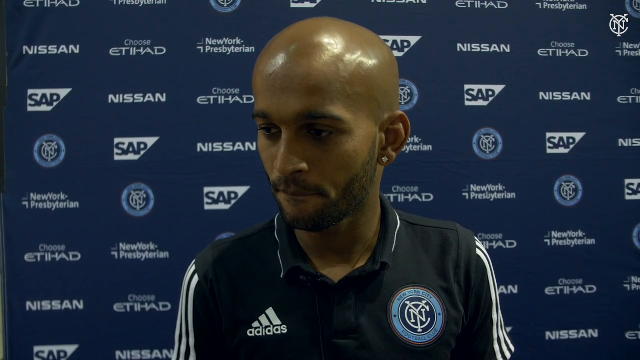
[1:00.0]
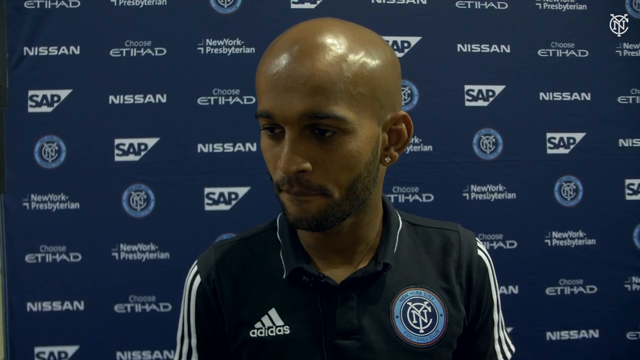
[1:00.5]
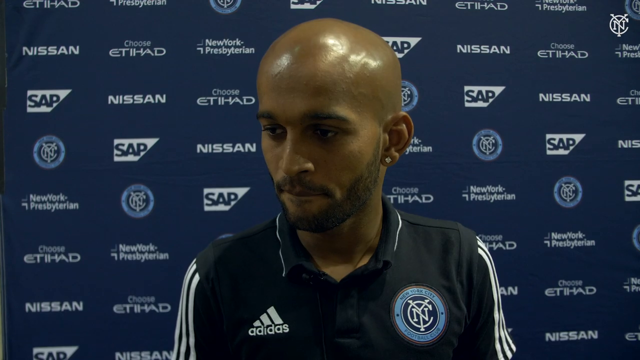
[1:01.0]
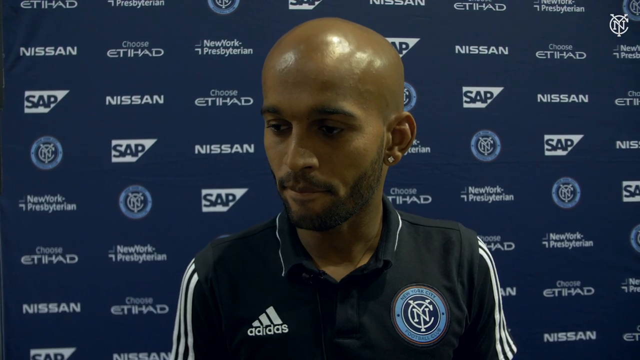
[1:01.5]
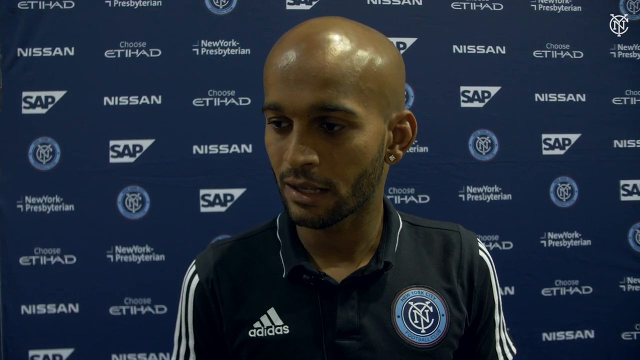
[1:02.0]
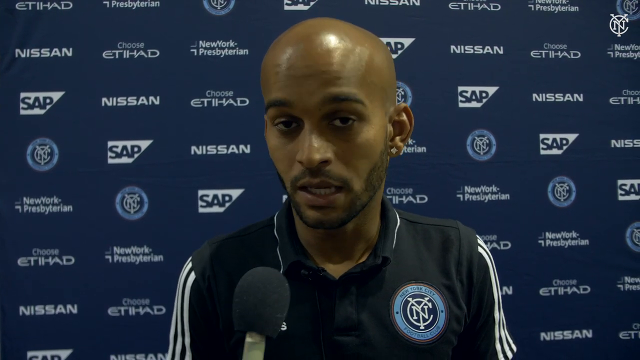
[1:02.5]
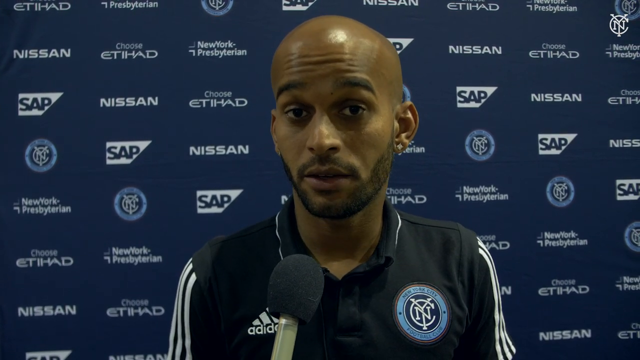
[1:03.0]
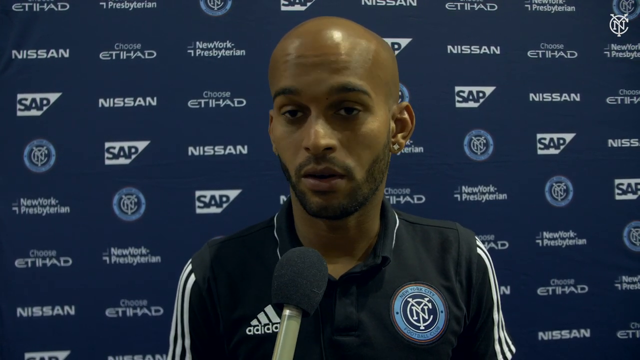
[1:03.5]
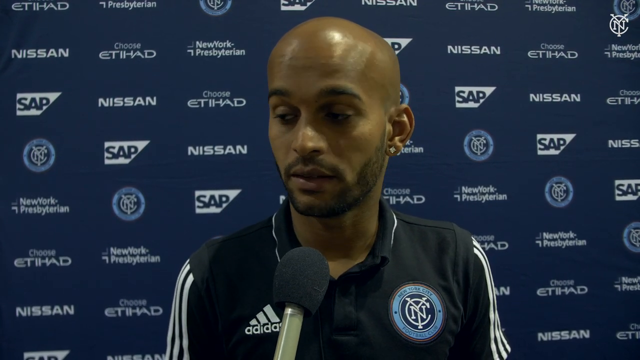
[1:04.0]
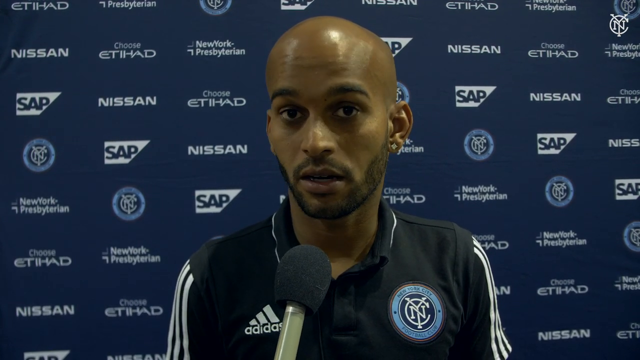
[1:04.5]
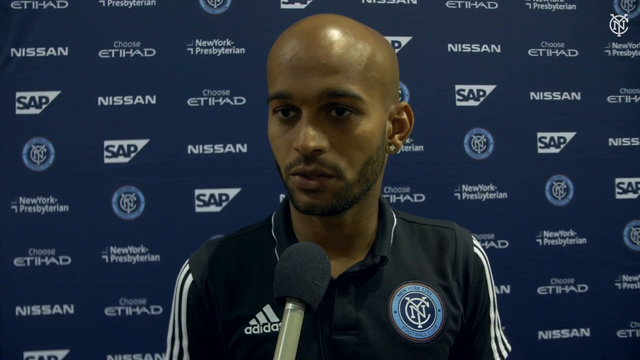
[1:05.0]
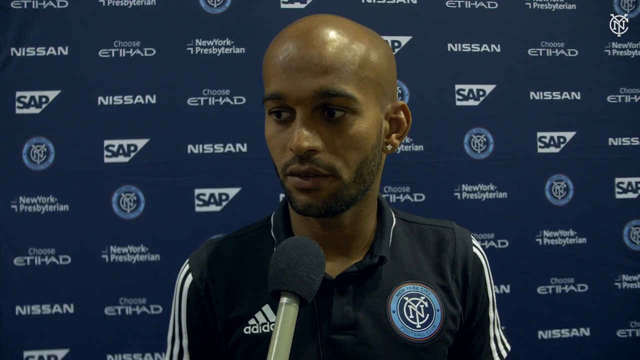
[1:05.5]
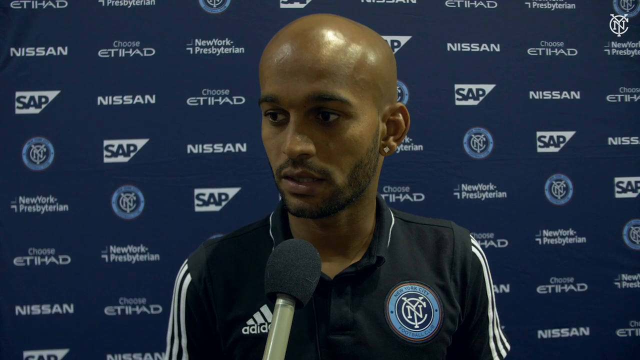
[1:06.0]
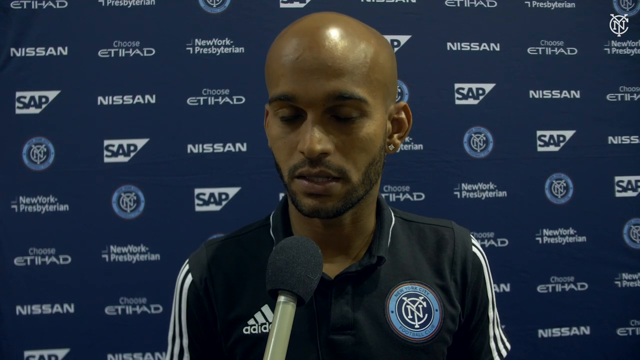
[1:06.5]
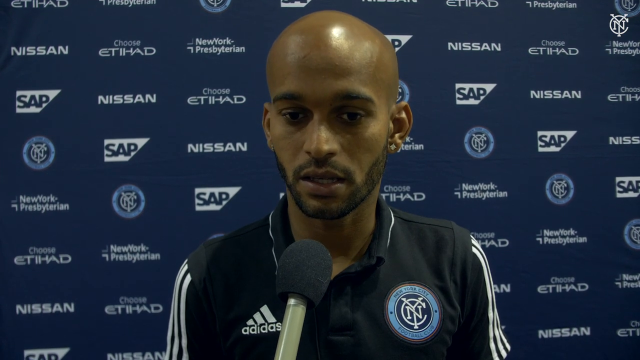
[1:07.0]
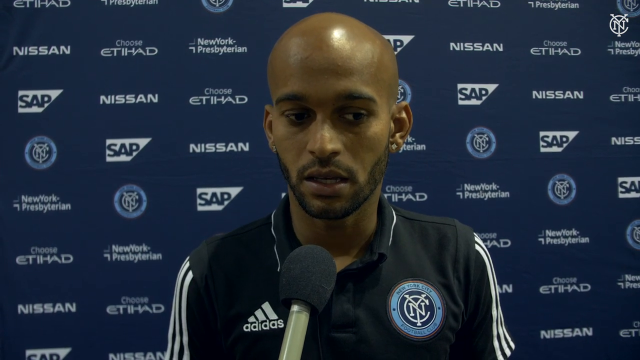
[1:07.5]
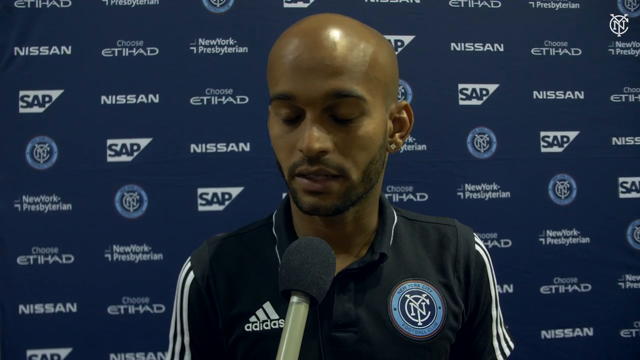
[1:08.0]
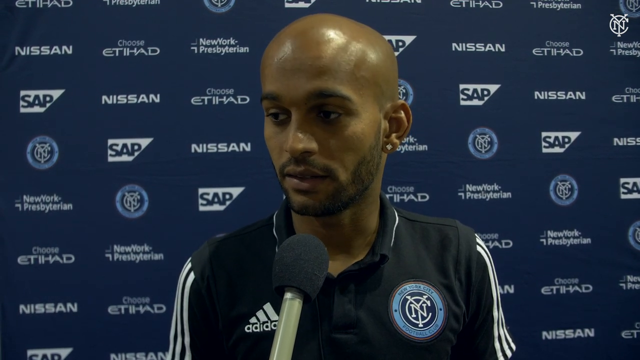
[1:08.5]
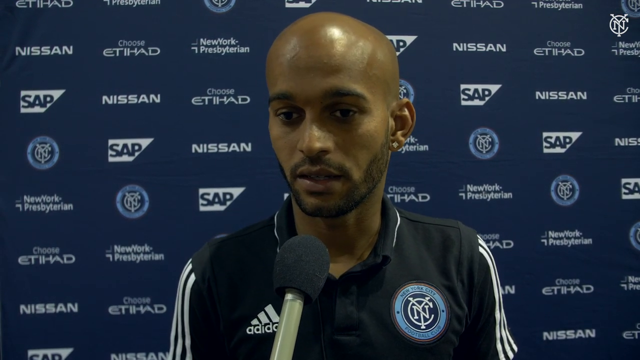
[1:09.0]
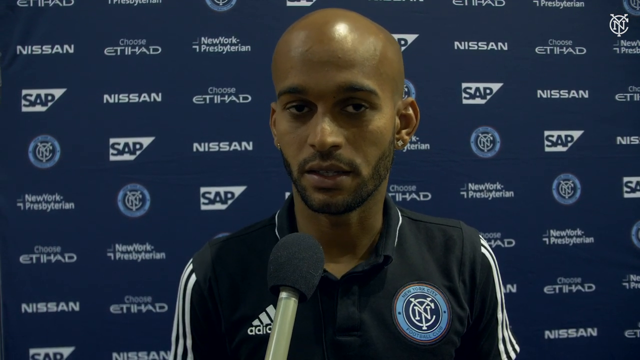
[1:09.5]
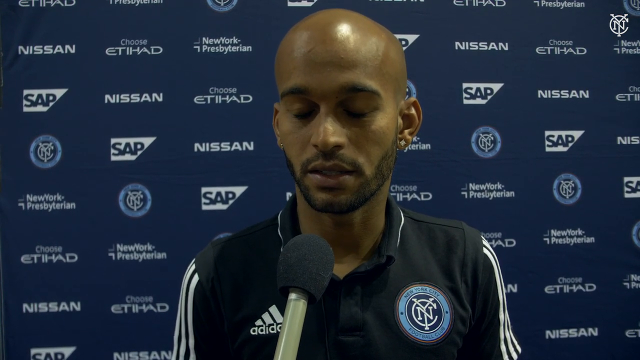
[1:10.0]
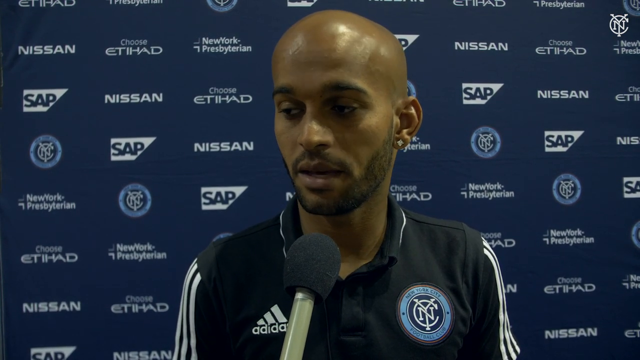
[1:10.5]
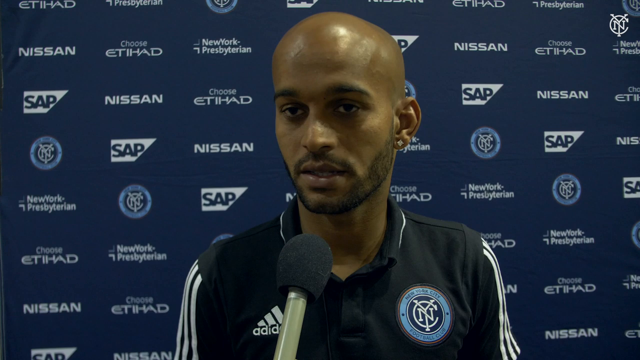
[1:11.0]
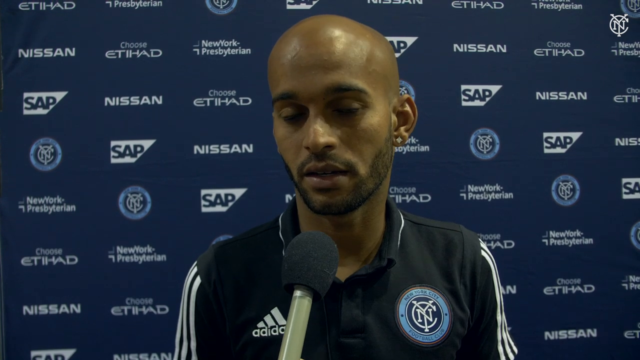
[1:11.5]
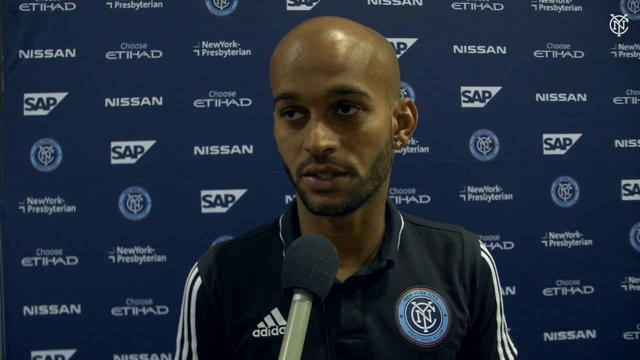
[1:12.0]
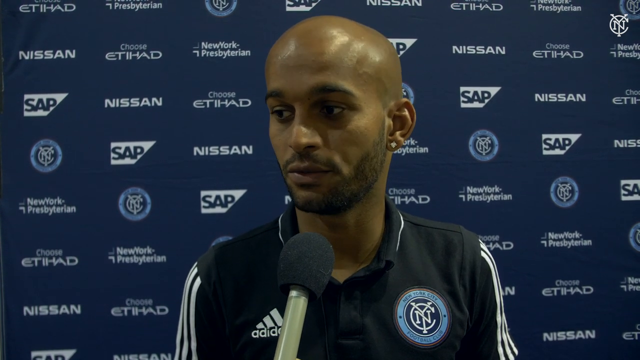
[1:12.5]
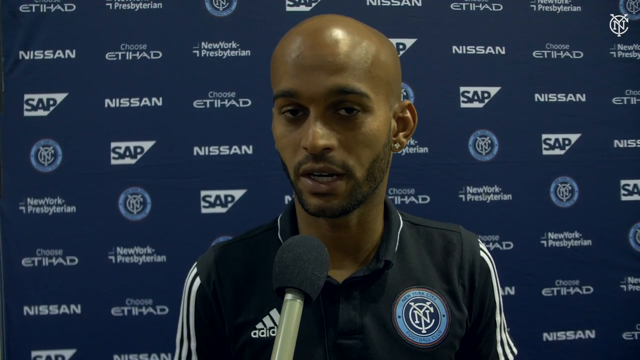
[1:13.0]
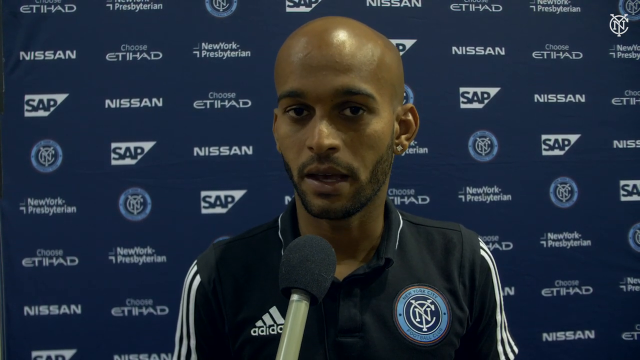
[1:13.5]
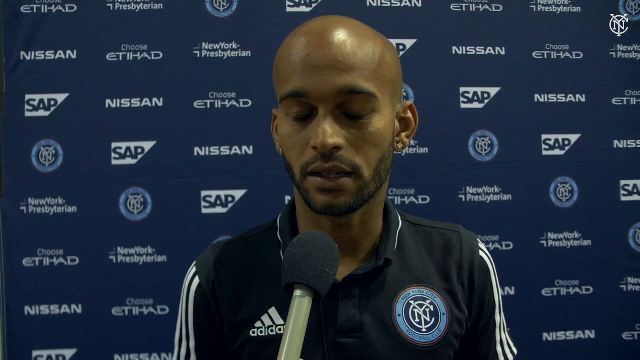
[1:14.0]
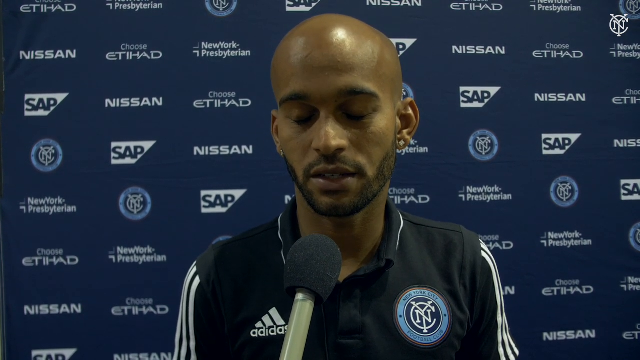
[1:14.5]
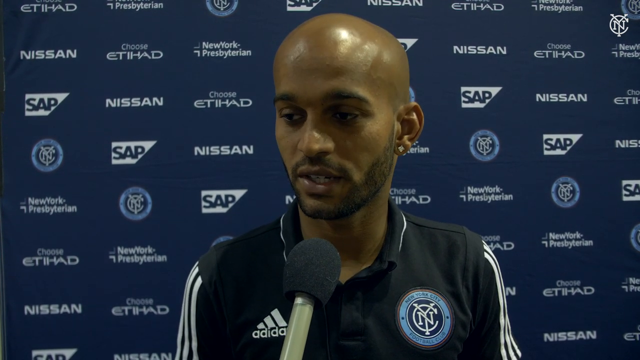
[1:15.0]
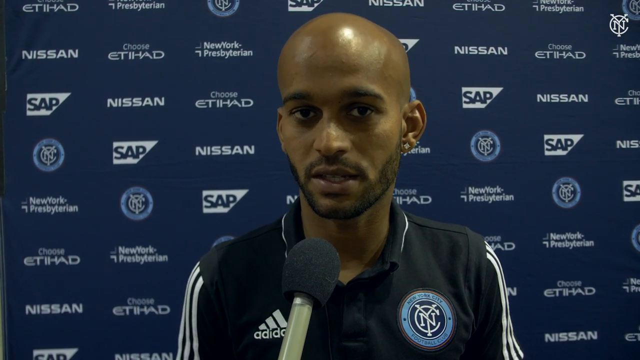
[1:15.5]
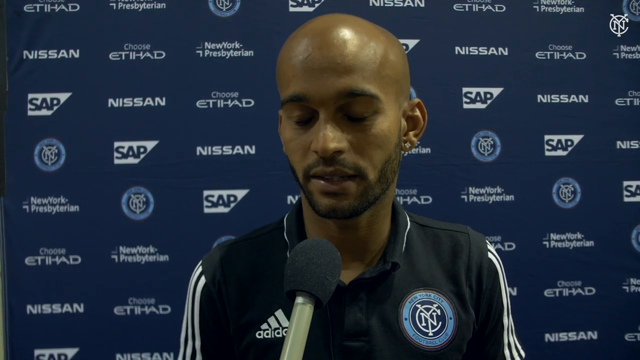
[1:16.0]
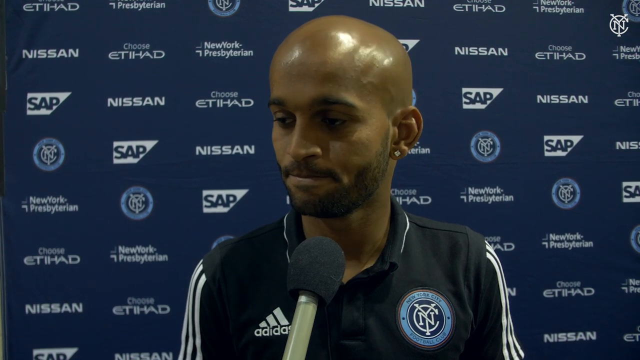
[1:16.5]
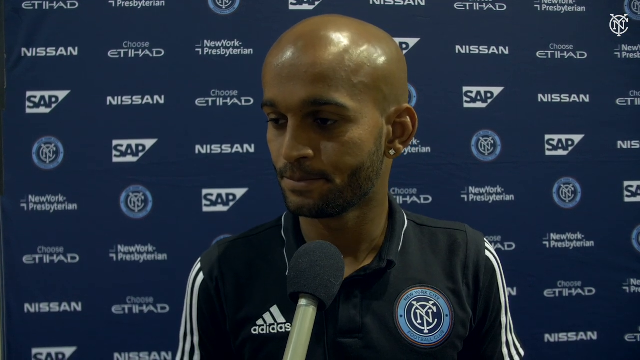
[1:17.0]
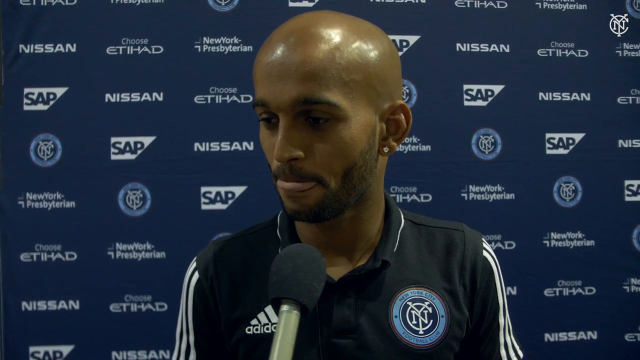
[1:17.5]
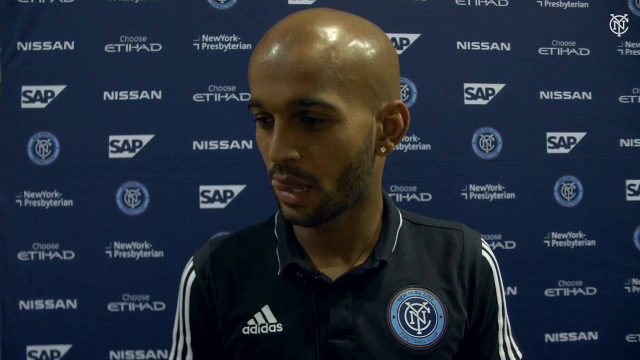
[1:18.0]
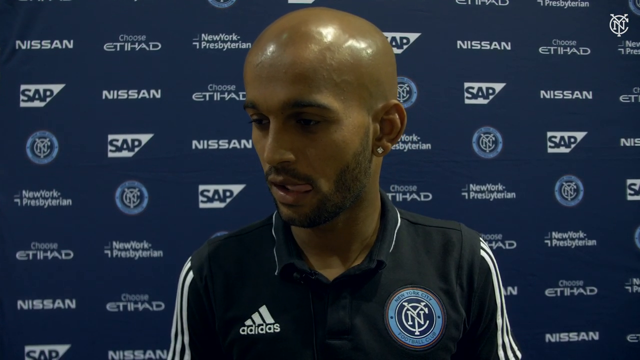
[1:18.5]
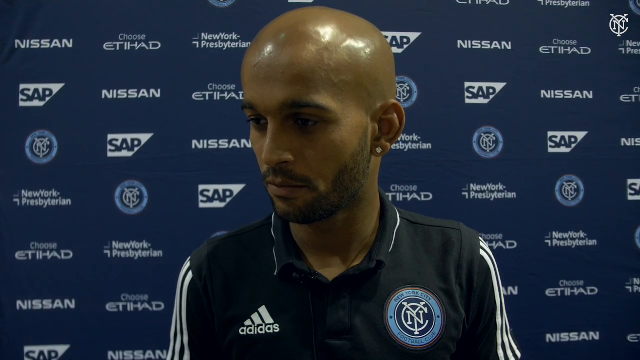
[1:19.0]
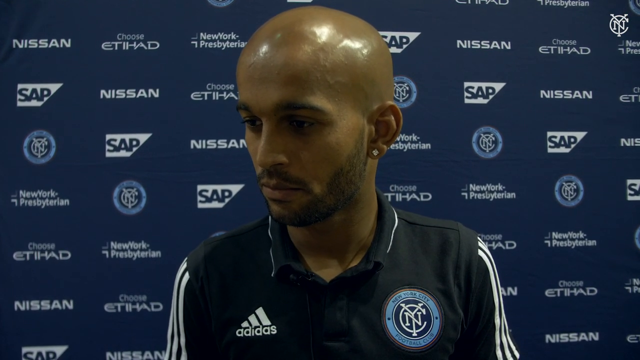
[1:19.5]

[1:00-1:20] In a close-up, a man being interviewed is shown only from the middle of his chest up, his head slightly turned to his right, toward the left side of the frame. He wears a black collared shirt. He nods and looks to his right. A microphone comes into view from the bottom center of the image, and the man looks toward the camera as he speaks. He raises his eyebrows and glances to his right, occasionally glancing back and forth between the camera and his right side, and occasionally nods. His eyes glance down and to his left. He speaks more into the mic, looks at the camera, and occasionally glances to his right and up to his right. He occasionally closes his eyes while he speaks.